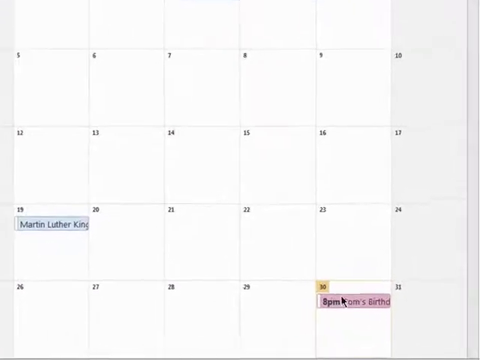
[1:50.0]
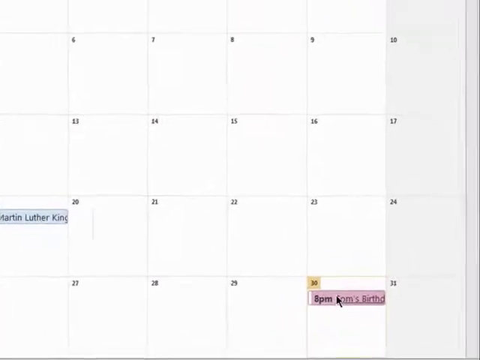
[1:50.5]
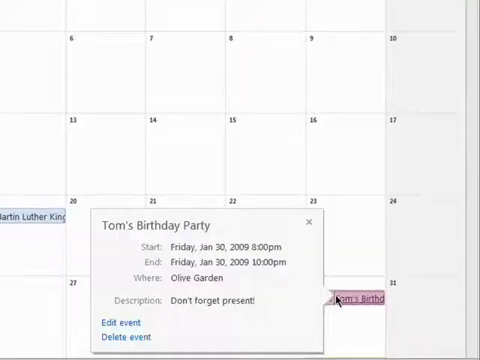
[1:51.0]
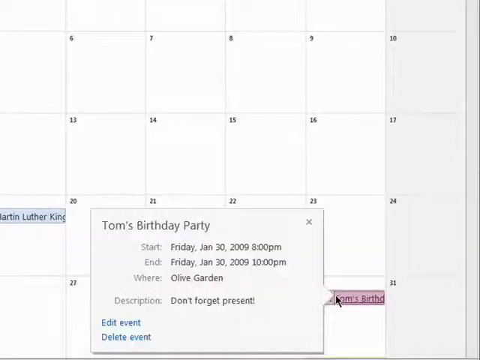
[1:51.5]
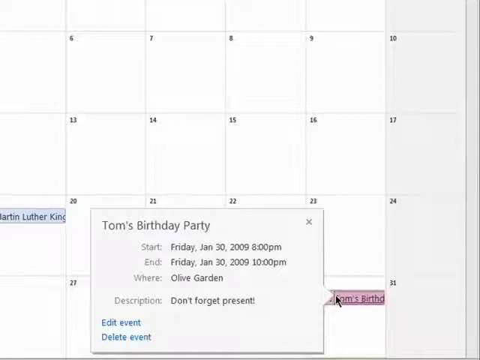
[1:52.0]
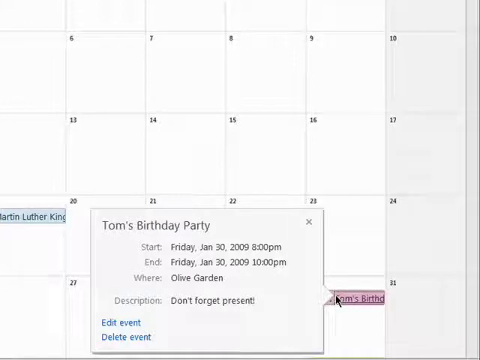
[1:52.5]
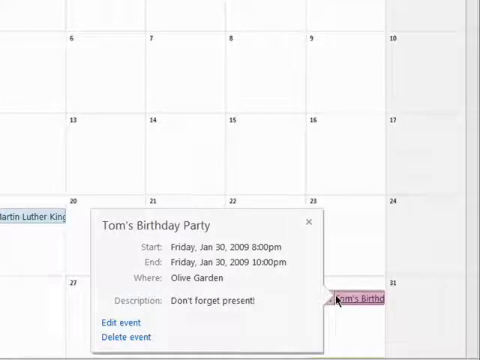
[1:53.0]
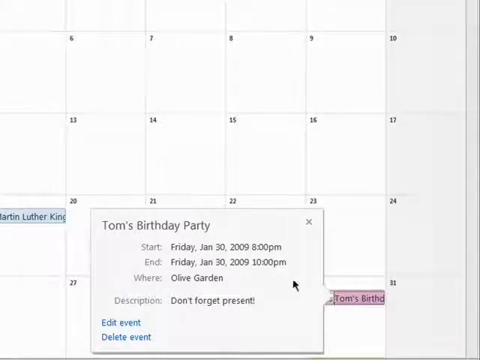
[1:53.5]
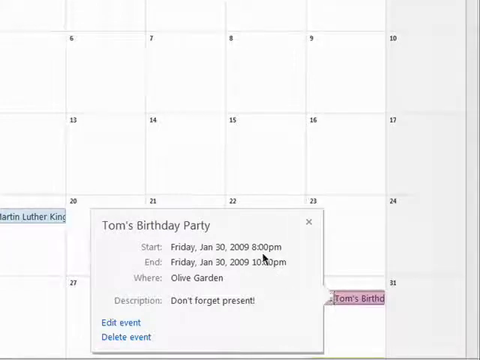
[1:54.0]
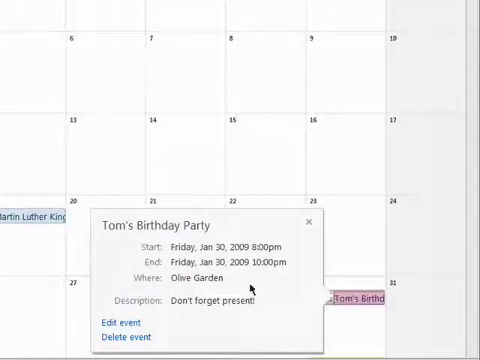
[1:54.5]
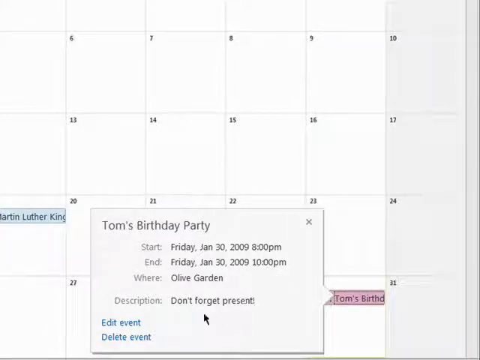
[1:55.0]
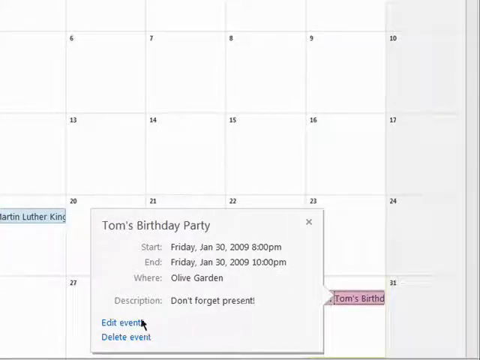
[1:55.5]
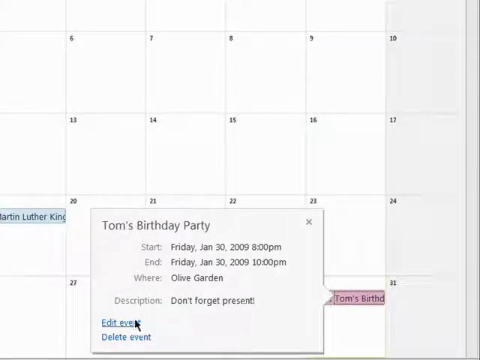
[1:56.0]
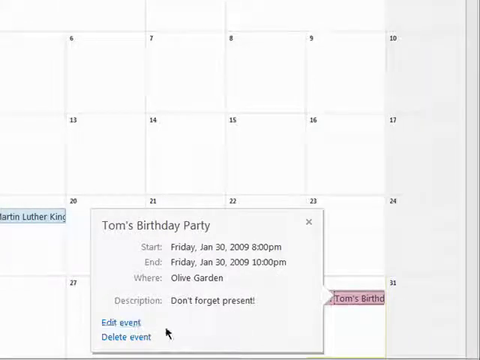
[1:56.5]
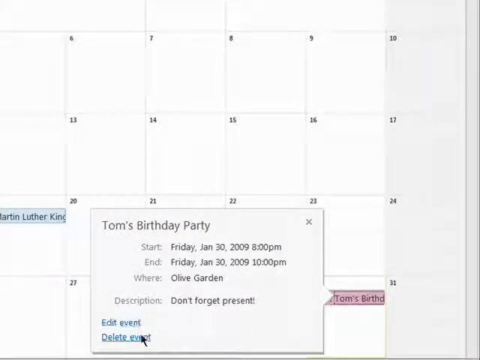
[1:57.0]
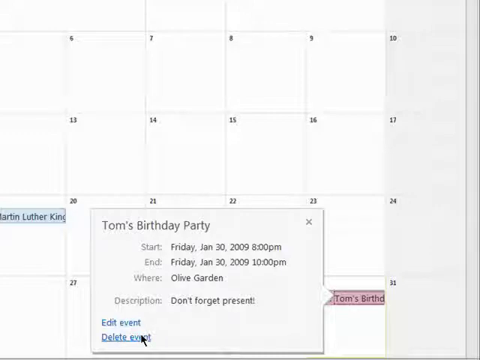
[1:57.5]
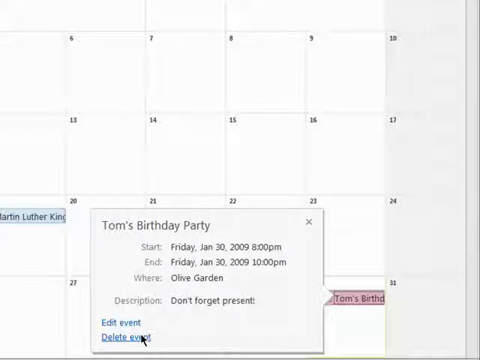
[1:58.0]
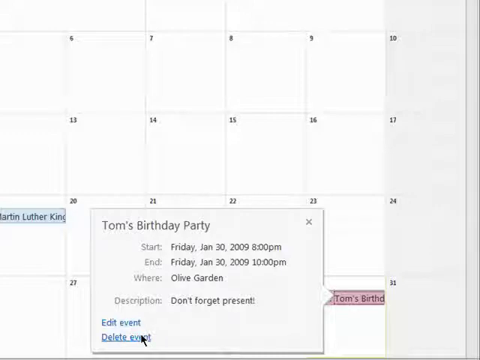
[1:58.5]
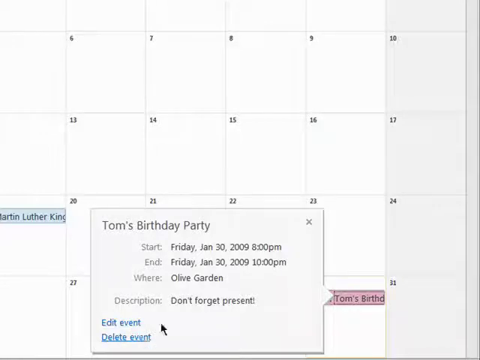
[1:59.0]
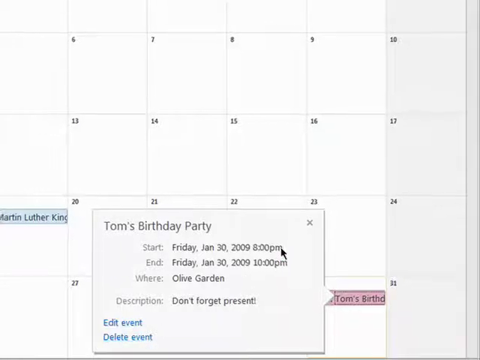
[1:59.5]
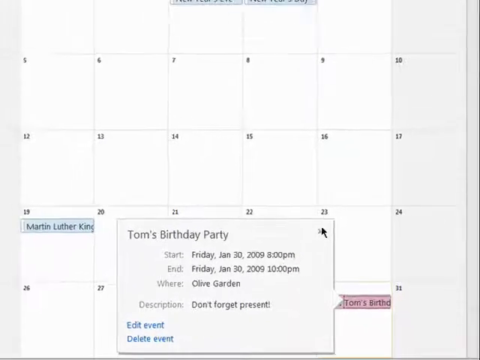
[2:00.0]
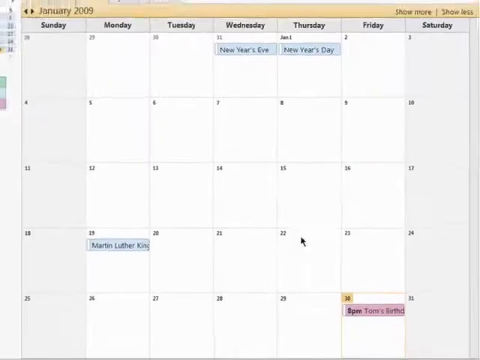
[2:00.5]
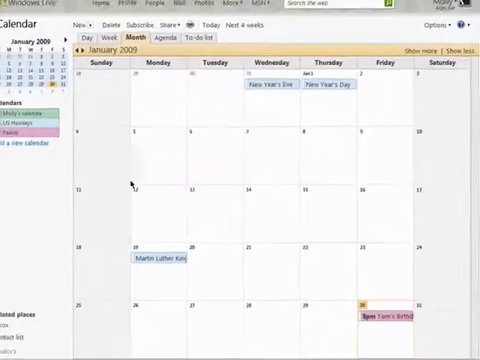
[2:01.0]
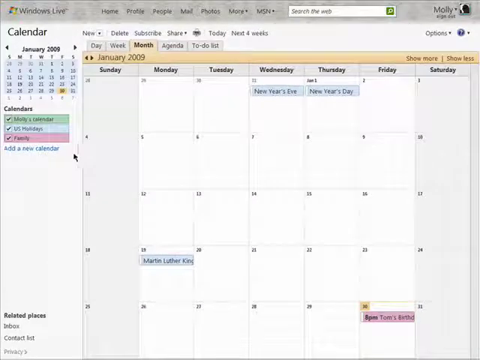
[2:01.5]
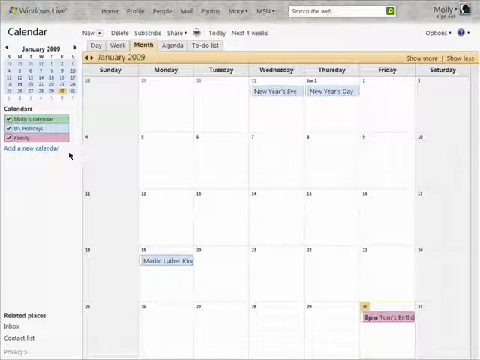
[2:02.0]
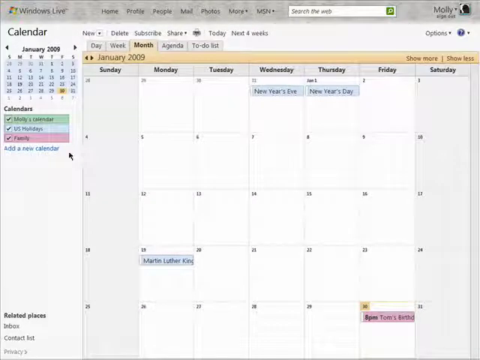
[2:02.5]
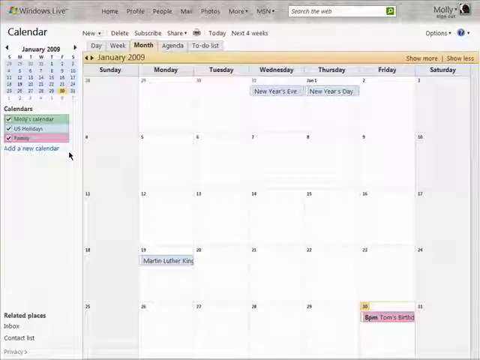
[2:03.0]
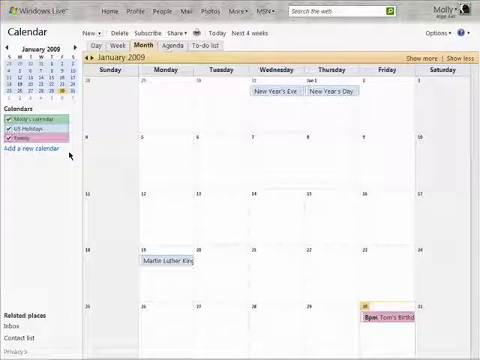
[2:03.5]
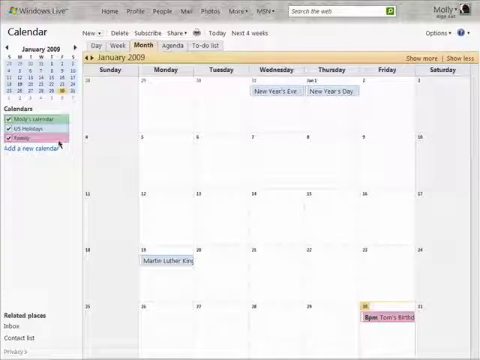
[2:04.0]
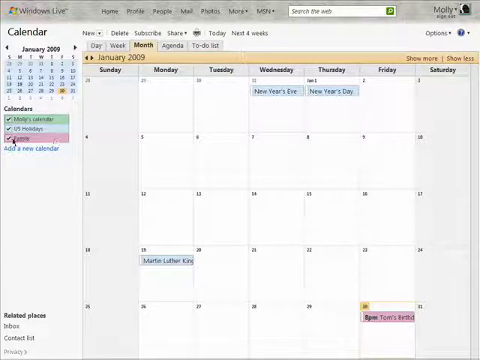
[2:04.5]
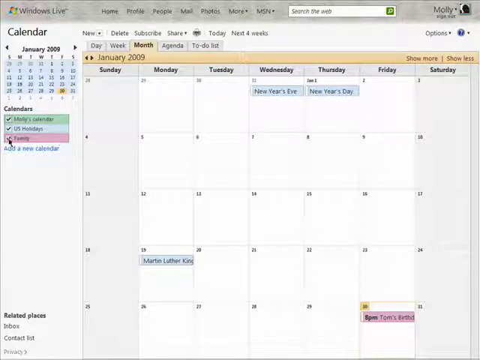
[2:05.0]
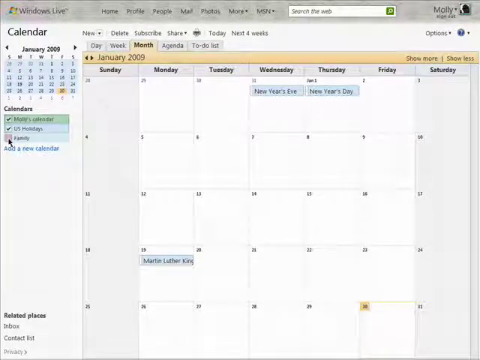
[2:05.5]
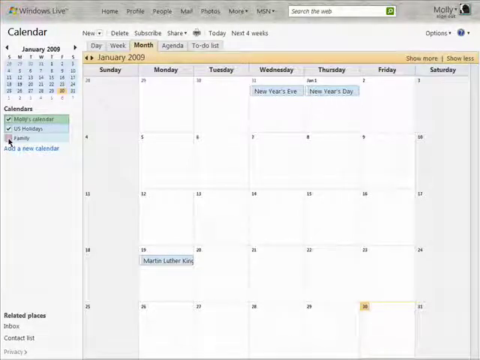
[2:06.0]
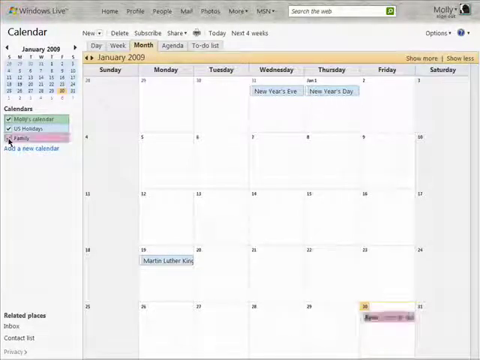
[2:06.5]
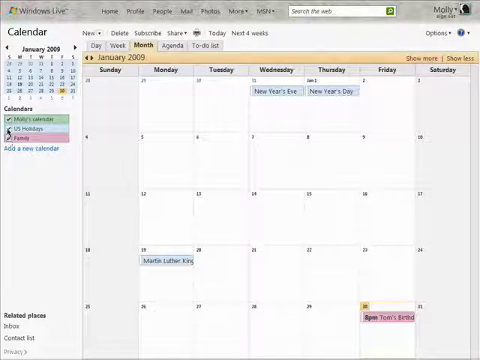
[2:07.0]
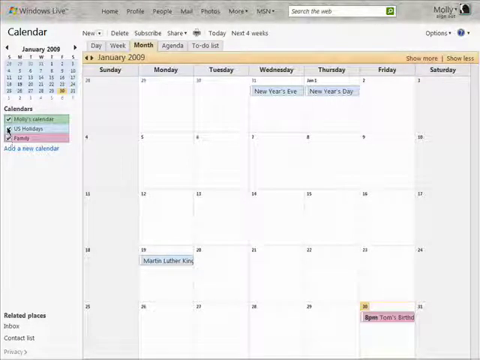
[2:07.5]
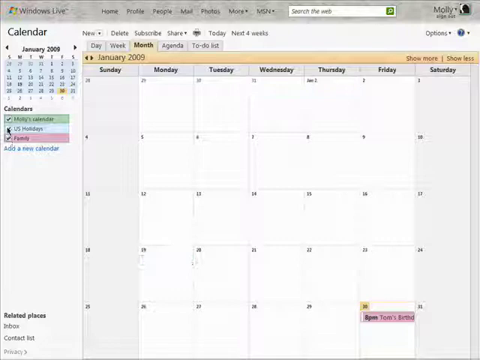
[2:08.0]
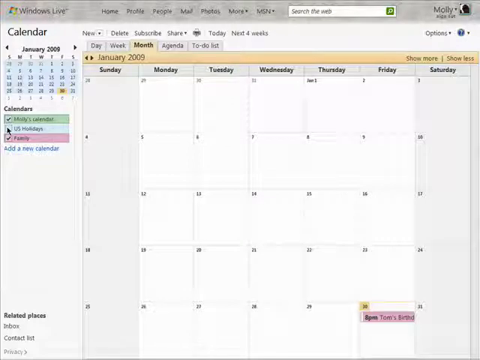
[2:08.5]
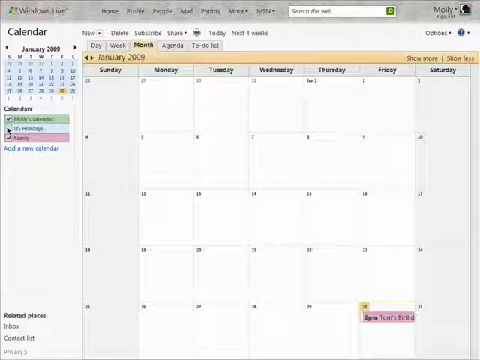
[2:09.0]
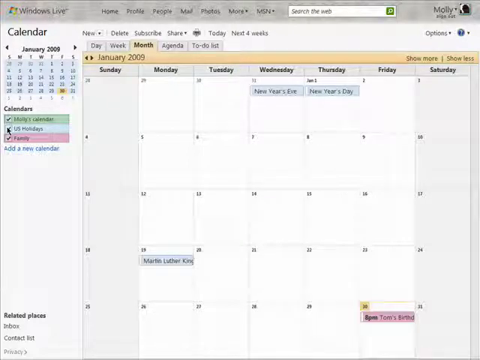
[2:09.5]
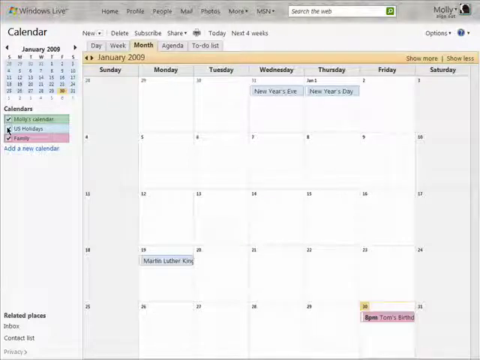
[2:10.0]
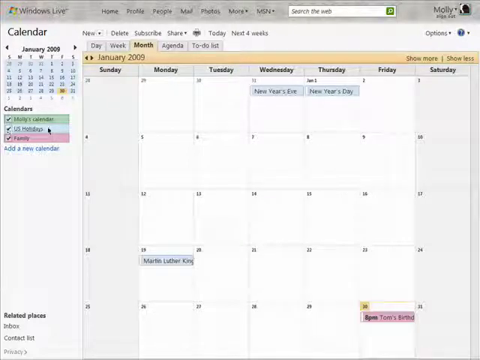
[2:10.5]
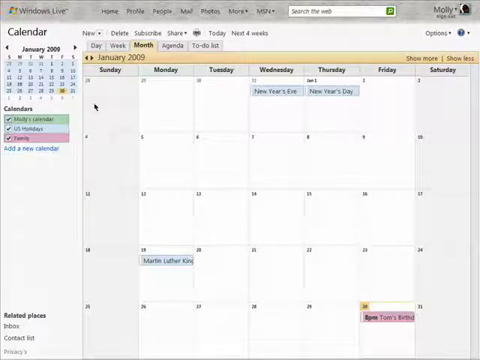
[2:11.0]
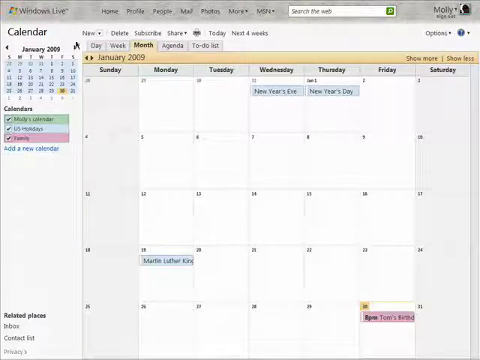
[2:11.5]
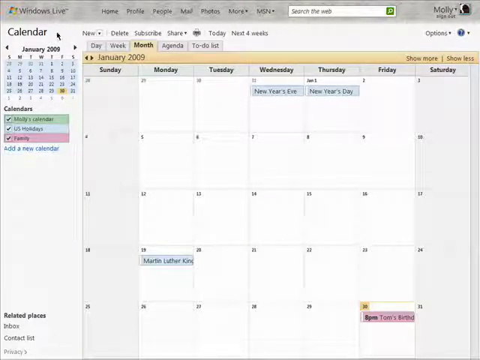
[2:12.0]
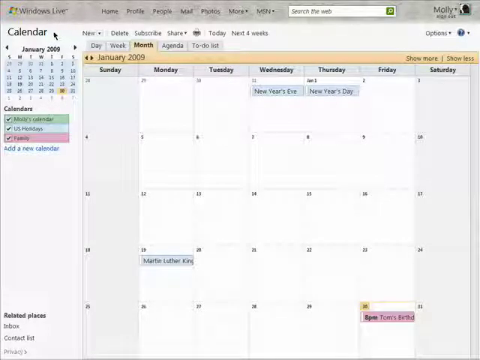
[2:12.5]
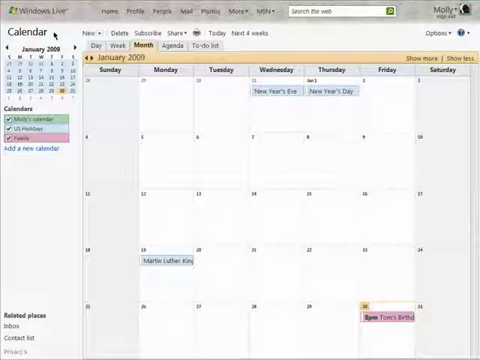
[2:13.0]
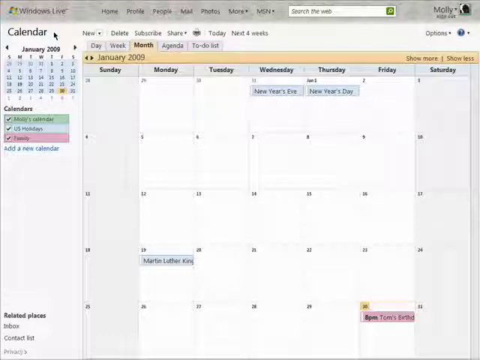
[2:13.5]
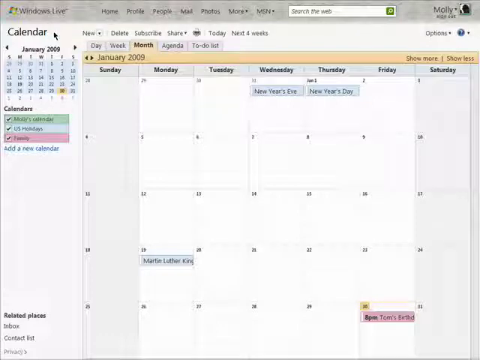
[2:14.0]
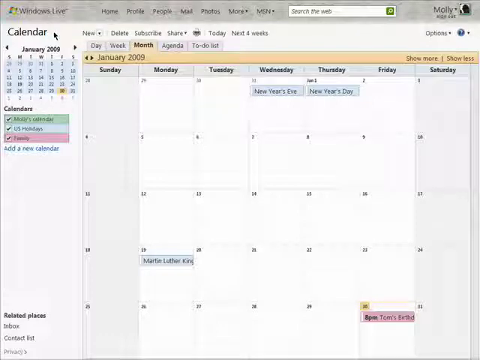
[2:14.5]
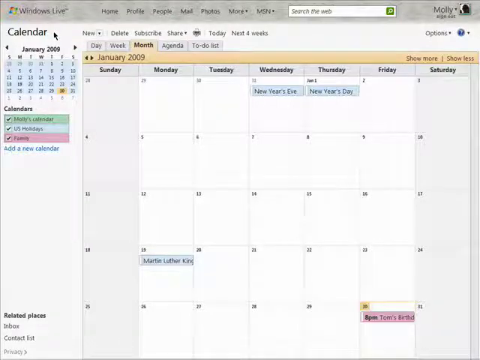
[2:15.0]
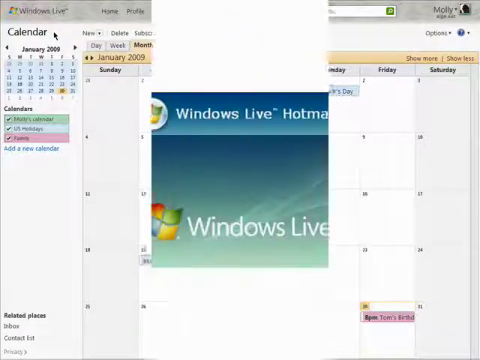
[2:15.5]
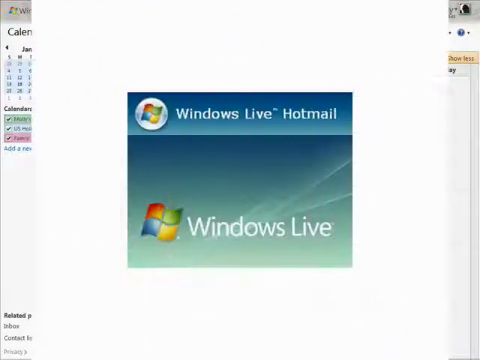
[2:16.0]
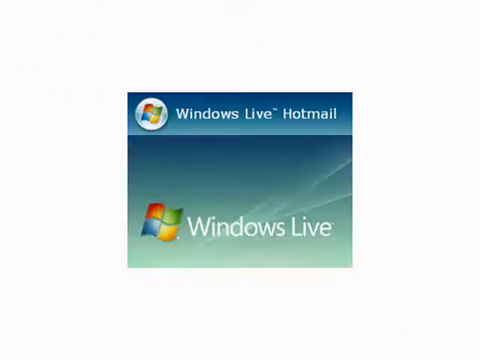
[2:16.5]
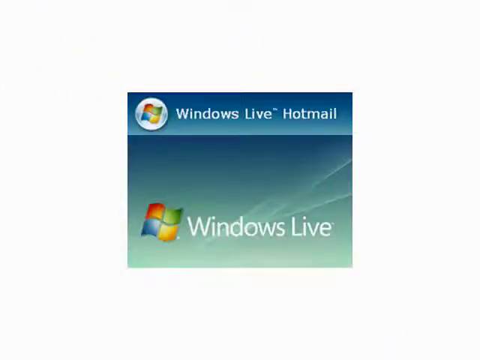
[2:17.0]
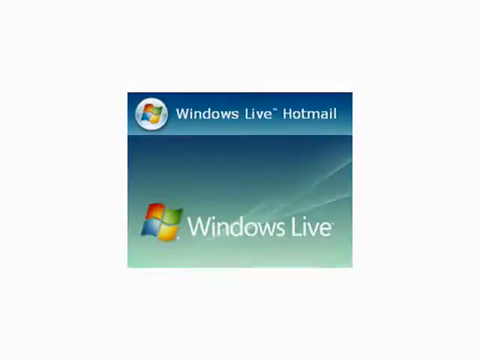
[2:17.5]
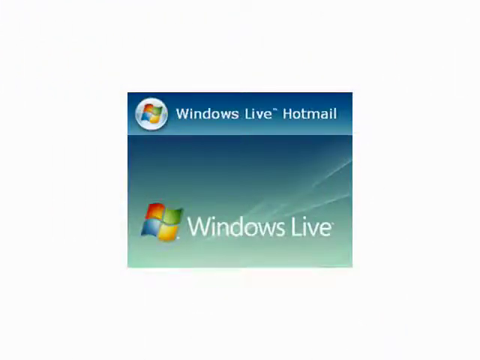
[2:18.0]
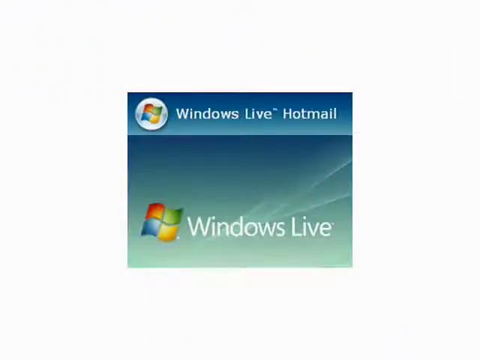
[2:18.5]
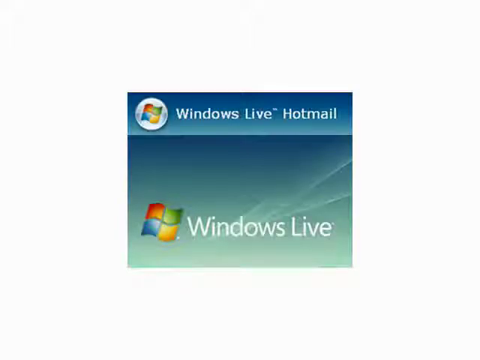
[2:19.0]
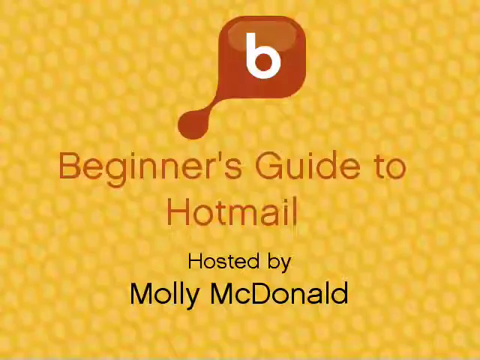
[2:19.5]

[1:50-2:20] A computer screen shows a calendar application in month view, with each day cell visible. The camera has panned in and zoomed in on the 30th of January 2009. The user hovers over an event with a pink background box titled "Tom's birthday party", and a tooltip appears with basic details about the event: the start and end times, where it is happening and any added description notes, along with hyperlinks to edit or delete the event. The user closes the tooltip and the camera pans out to show the wider view of the calendar month. The user hovers over the left-hand menu pane, in the calendars section, which lists three calendars: Molly's calendar, New Year's holidays and family, each with a ticked checkbox next to it. The user unticks the checkbox next to family; as they tick and untick it, the events associated with that calendar hide and display in the calendar view. The screen then transitions: a new window appears, showing its centre first and fading outwards until the old calendar view is overlaid by an image with a white background and a Windows Live logo in the centre.